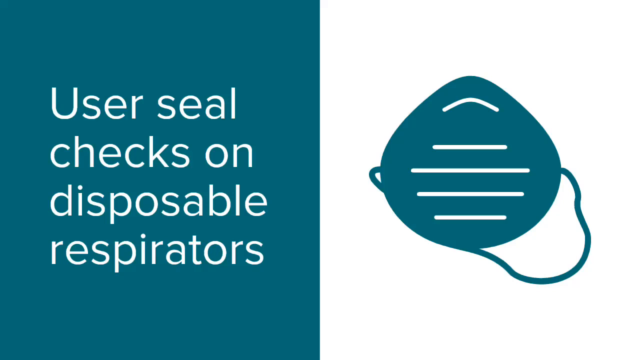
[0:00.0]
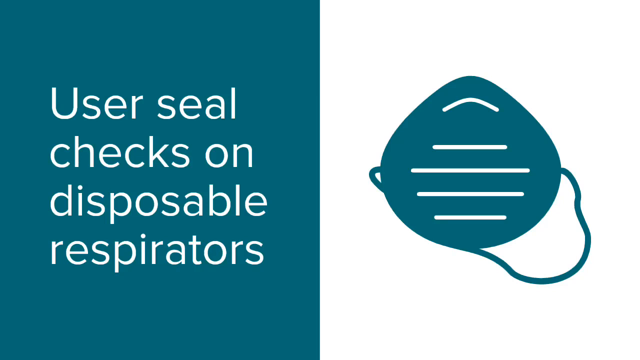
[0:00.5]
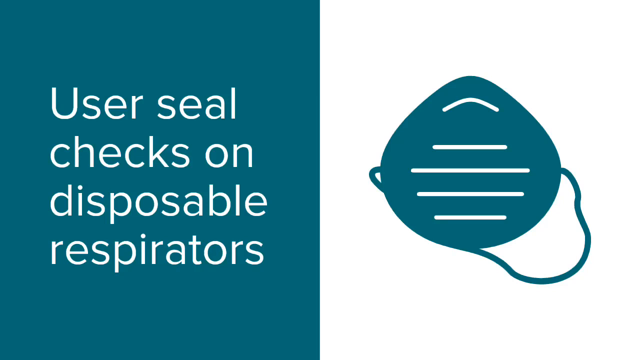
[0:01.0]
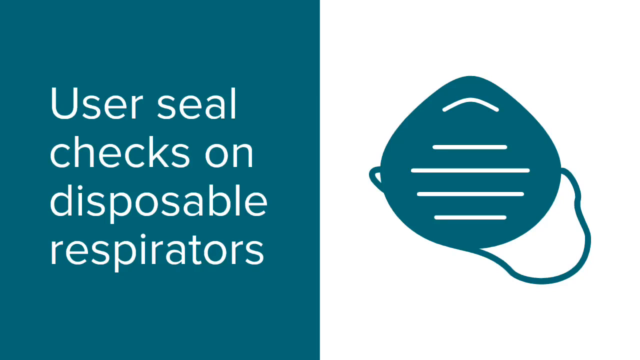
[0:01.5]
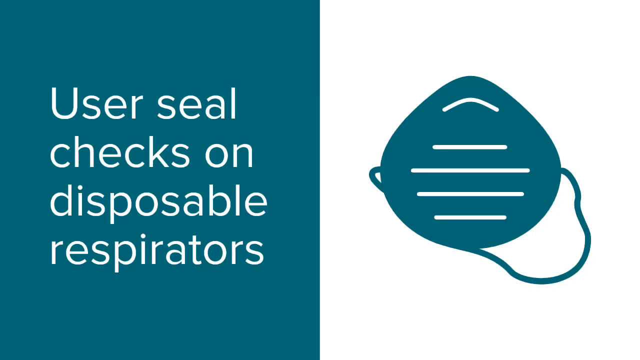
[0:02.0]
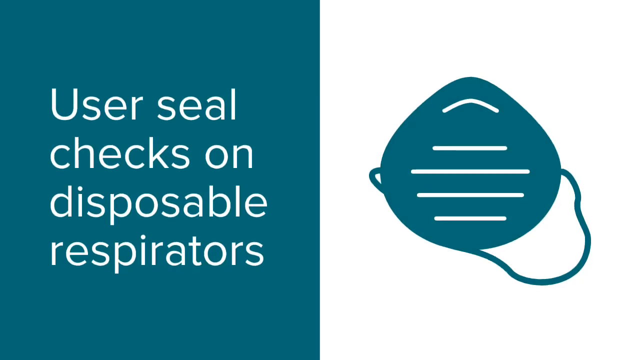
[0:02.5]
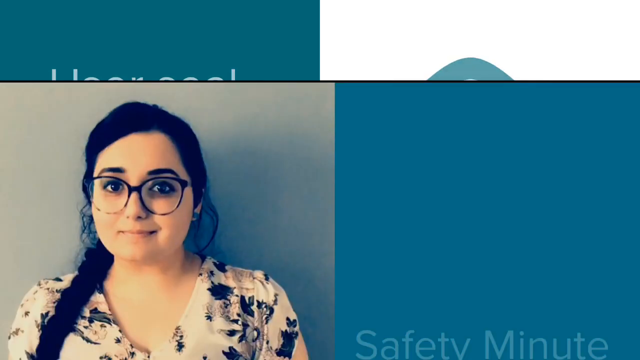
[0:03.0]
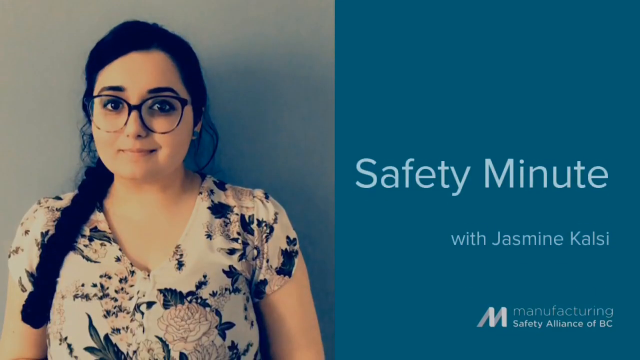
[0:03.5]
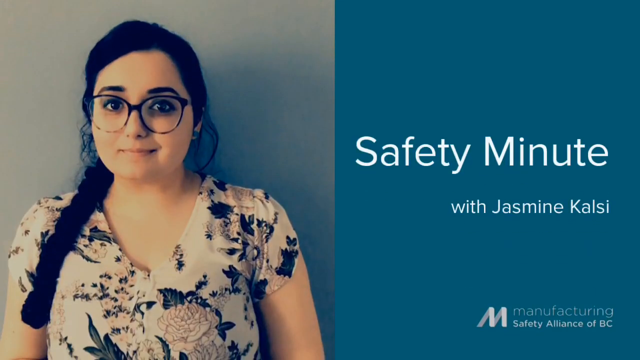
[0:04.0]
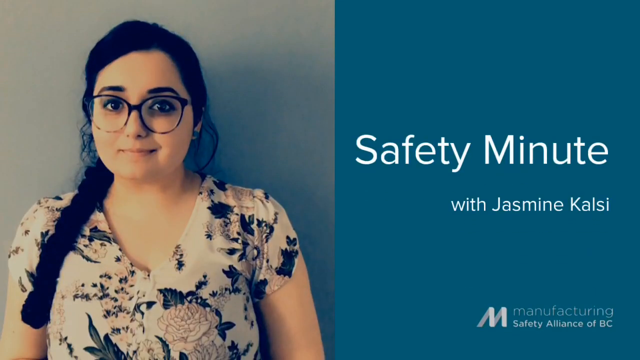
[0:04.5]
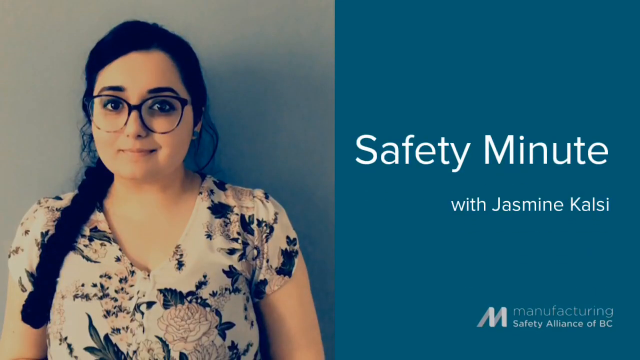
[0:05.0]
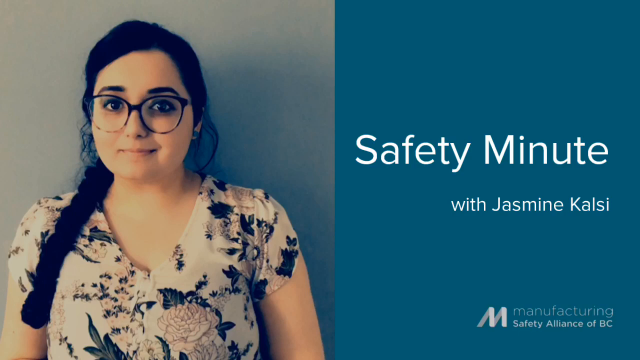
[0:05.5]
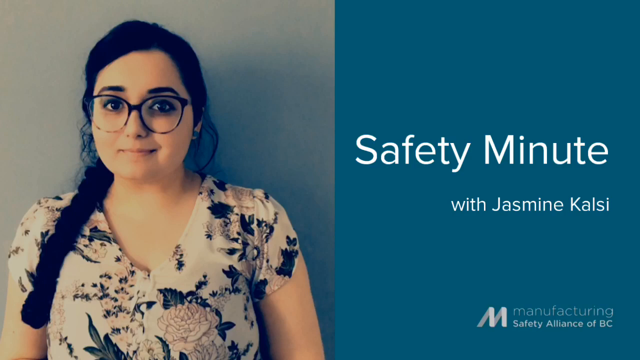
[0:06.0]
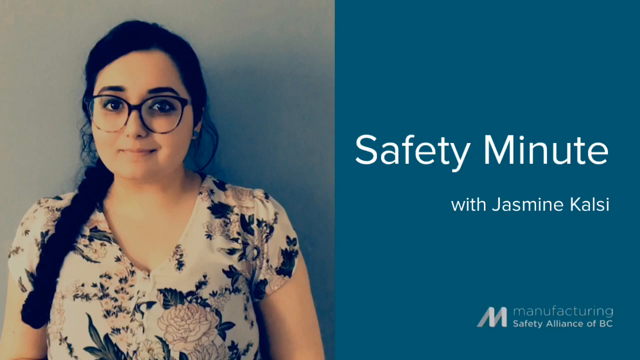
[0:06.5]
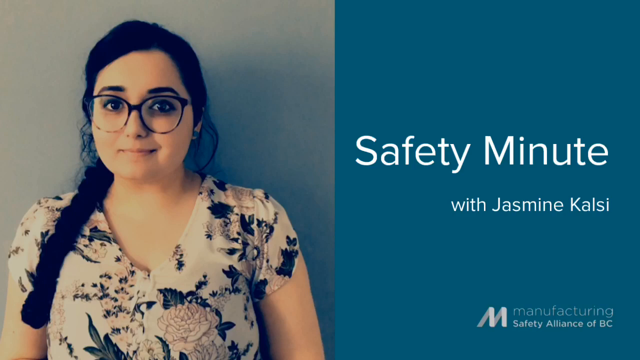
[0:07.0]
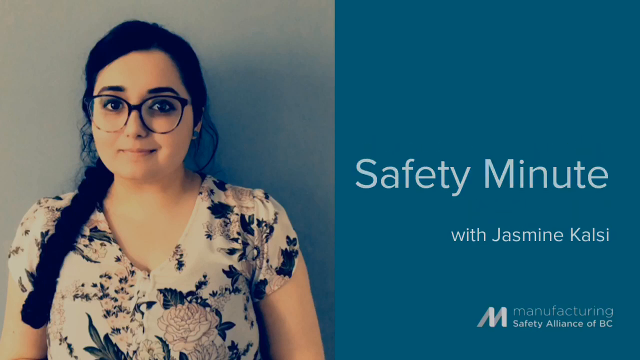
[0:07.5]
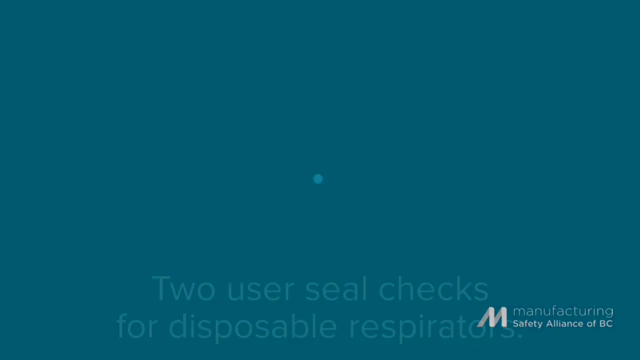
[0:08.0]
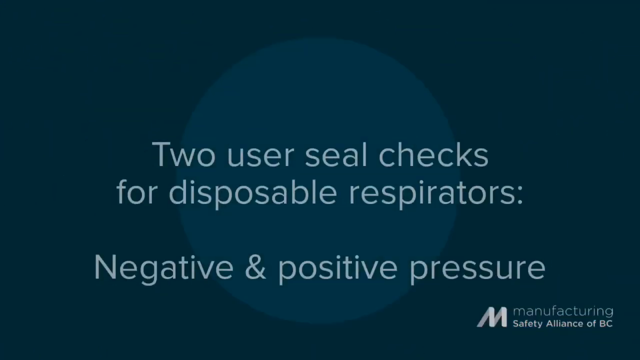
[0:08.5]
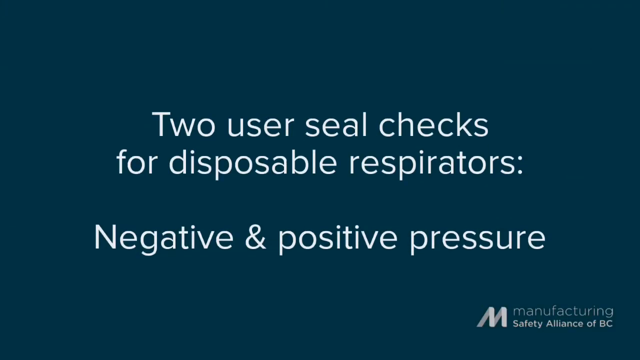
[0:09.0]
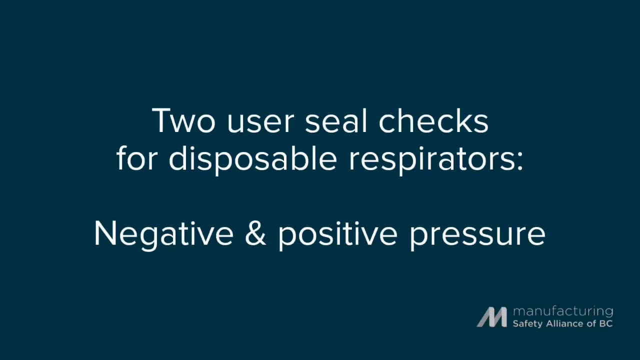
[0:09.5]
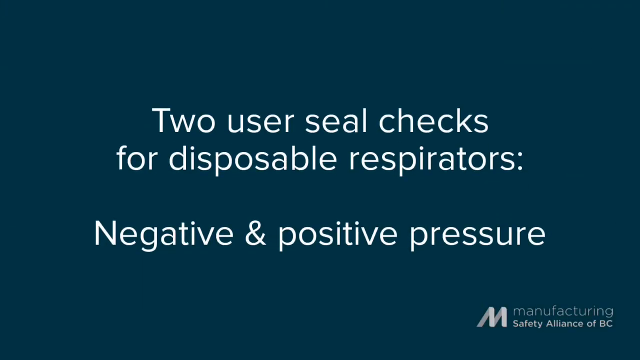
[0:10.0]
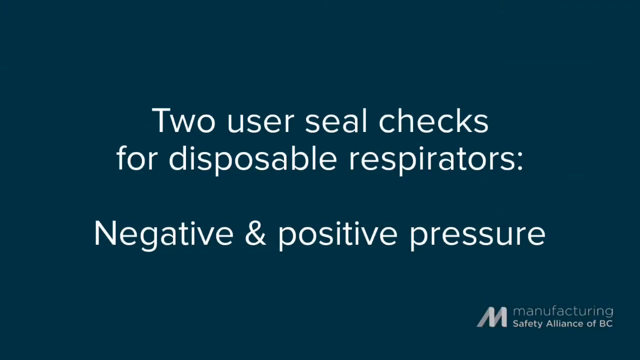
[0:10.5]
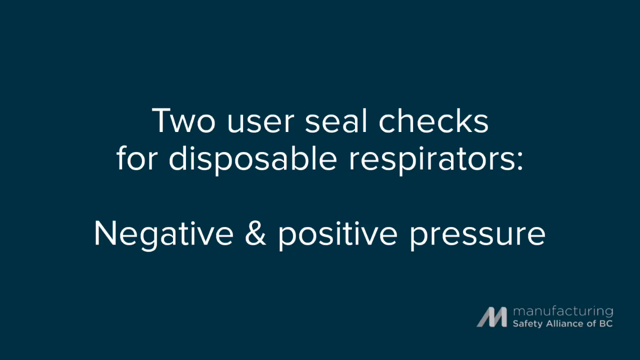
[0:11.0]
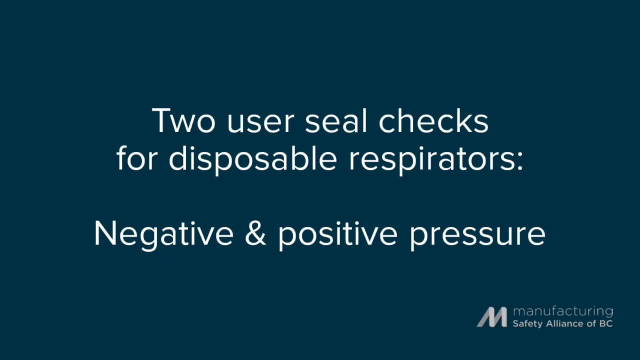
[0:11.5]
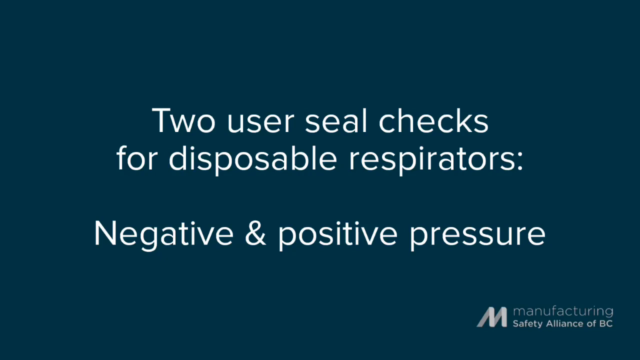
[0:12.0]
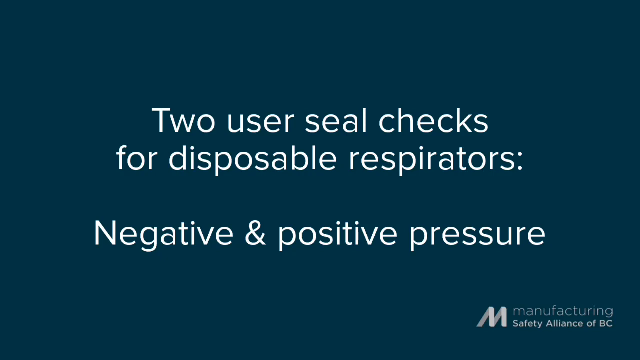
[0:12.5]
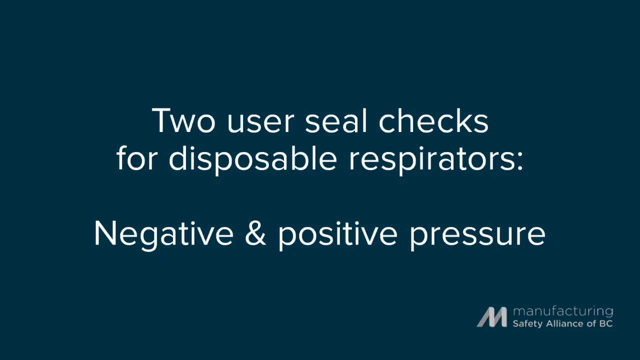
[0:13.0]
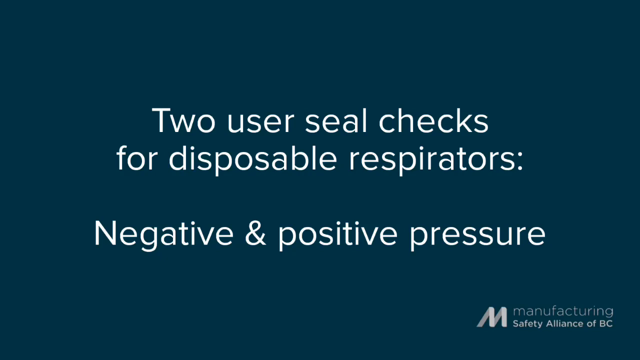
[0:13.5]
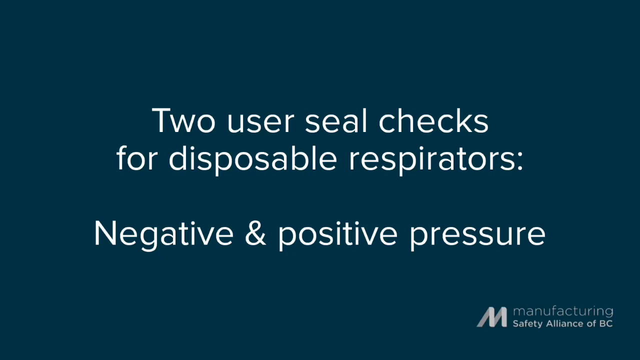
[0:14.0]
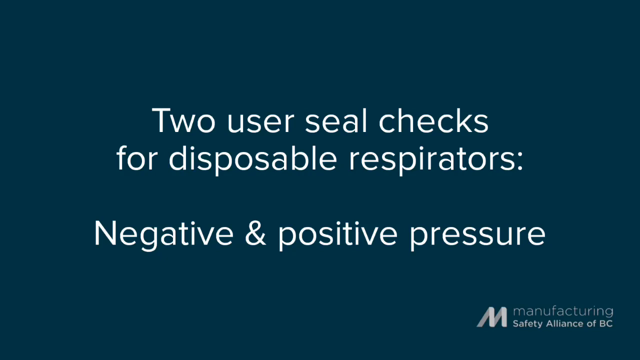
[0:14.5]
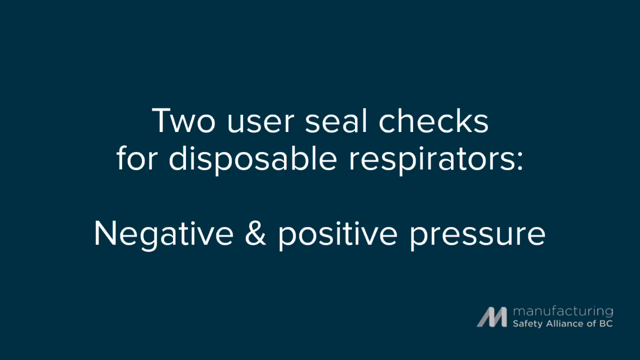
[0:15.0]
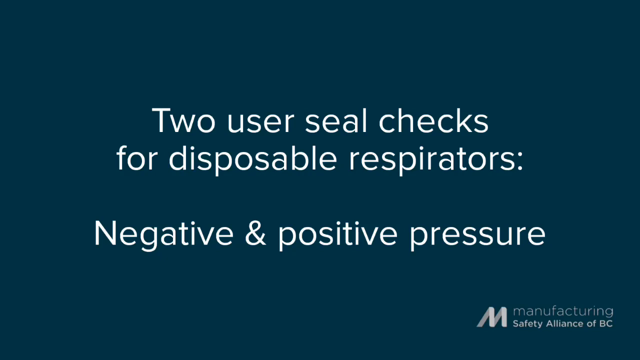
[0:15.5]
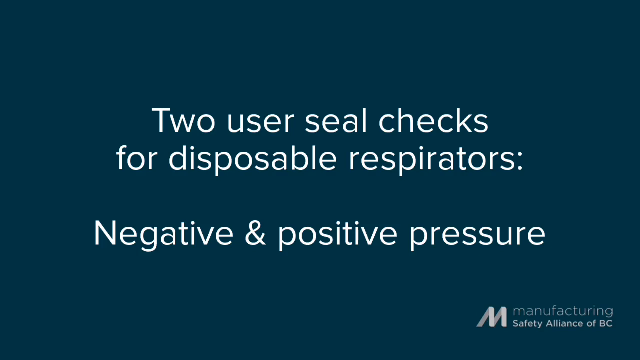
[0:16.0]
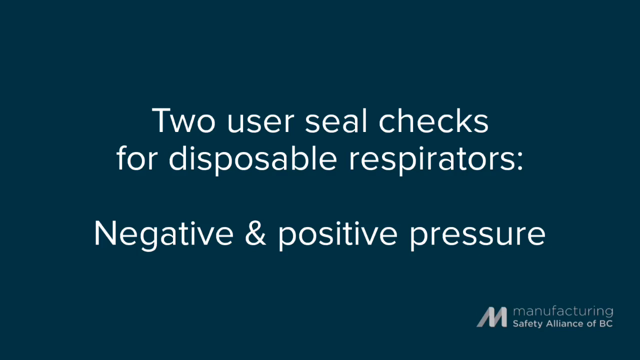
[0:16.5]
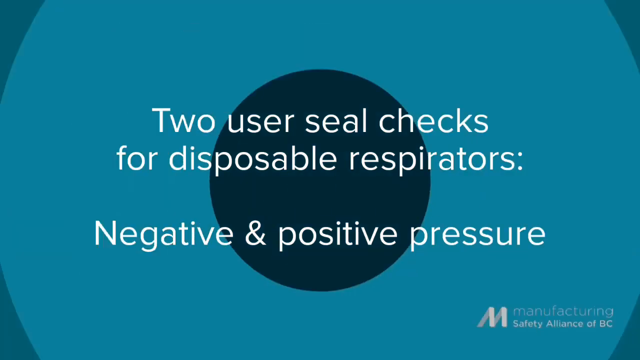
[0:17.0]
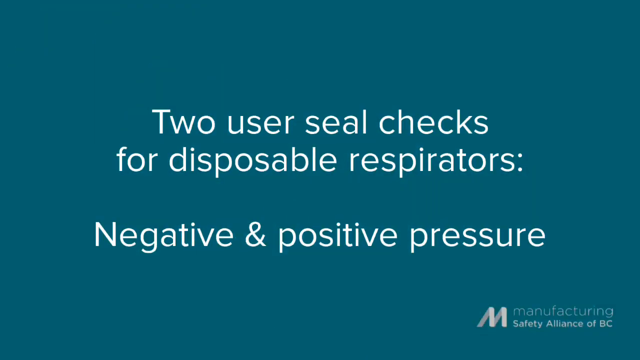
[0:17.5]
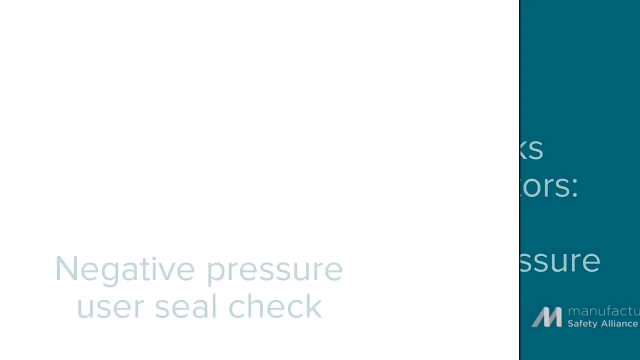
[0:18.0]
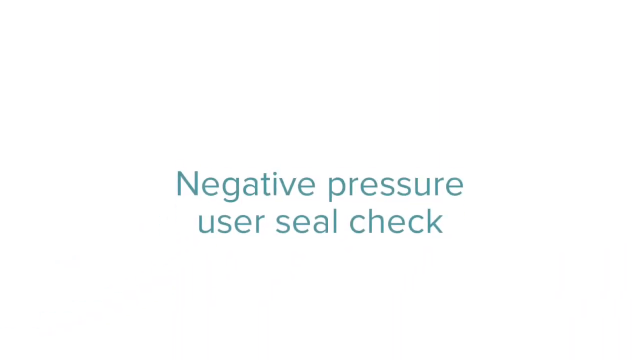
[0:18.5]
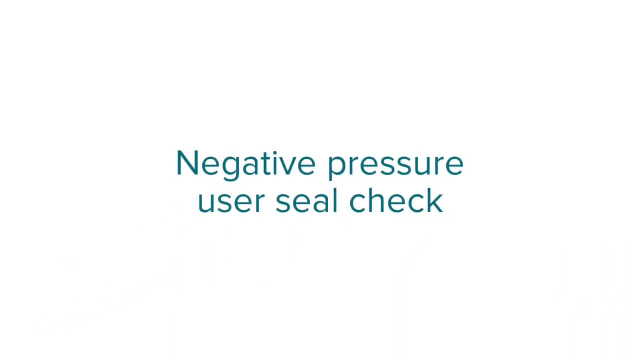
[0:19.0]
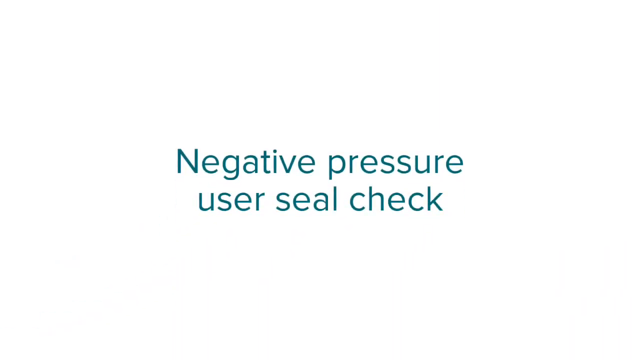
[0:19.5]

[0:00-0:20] The video opens on a split screen. On the right, against a white background, is an artist's cartoon-style sketch of an N95-style mask, with the nose clip drawn in white, a strap, and cross-hatching that shows an artist's interpretation of the mask's support arches. On the left is a green background with white text reading "user seal checks on disposable respirators." The video then changes to a second screen, a still split-screen image with a green background on the right carrying the white lettering "Safety Minute, with Jasmine Kalsi." On the left is a picture of a woman with black hair in a long braid across her right shoulder, wearing a floral V-neck dress and dark horn-rimmed-style glasses, standing in front of a neutral gray-green background. Next comes a black background with white text across the center reading "two user seal checks for disposable respirators, negative and positive pressure." A dark circular sphere appears in the background behind the text as an accent. The image then changes to a white background with a gray accent at the bottom and the greenish-gray text "negative pressure user seal check" across the screen.